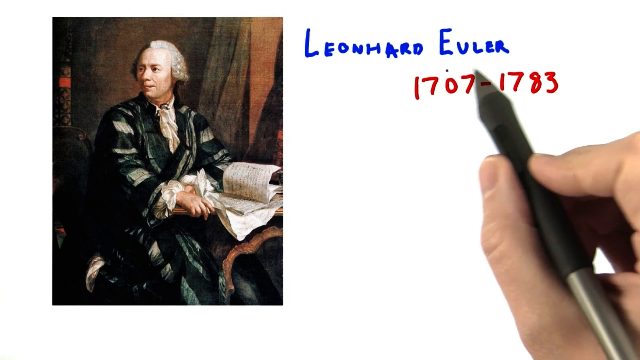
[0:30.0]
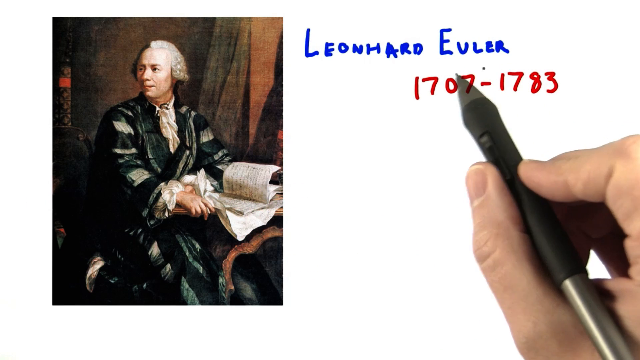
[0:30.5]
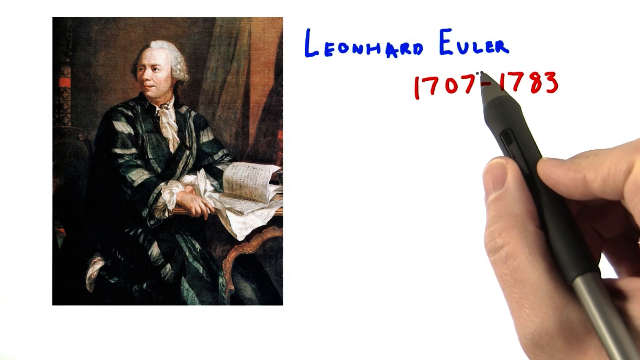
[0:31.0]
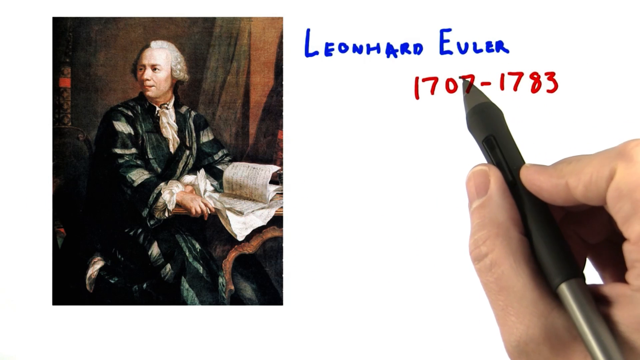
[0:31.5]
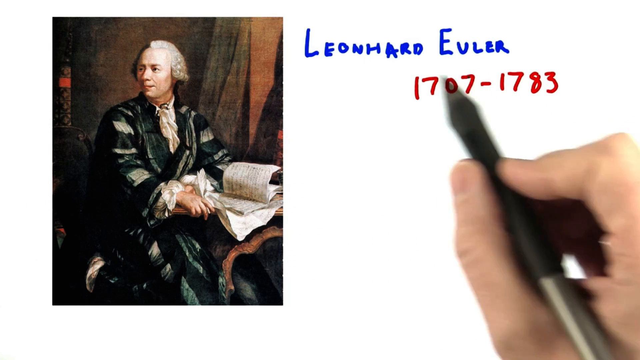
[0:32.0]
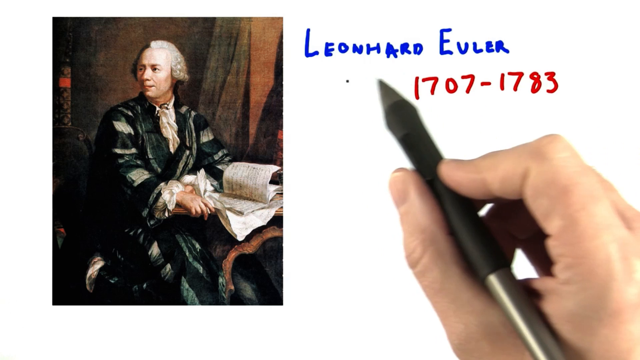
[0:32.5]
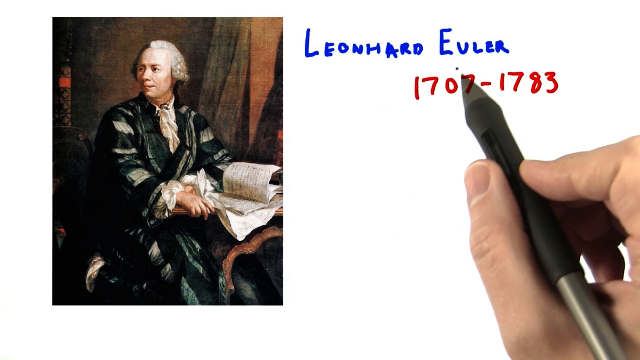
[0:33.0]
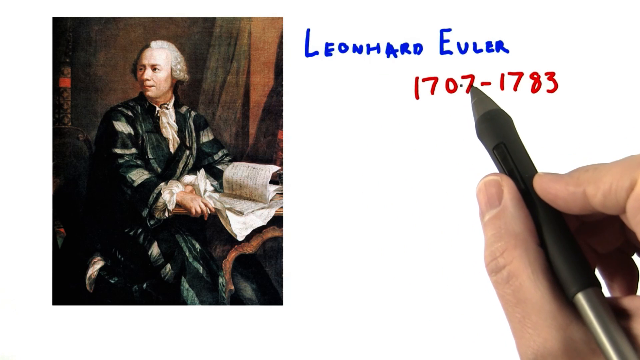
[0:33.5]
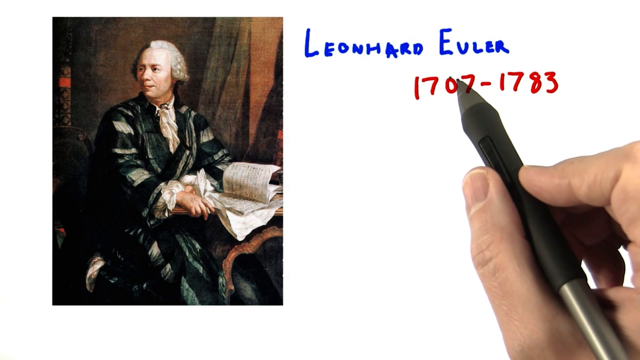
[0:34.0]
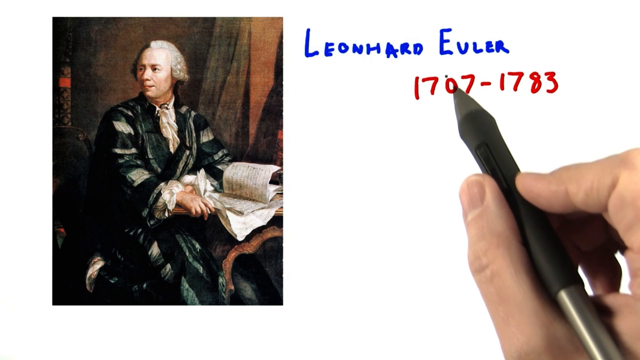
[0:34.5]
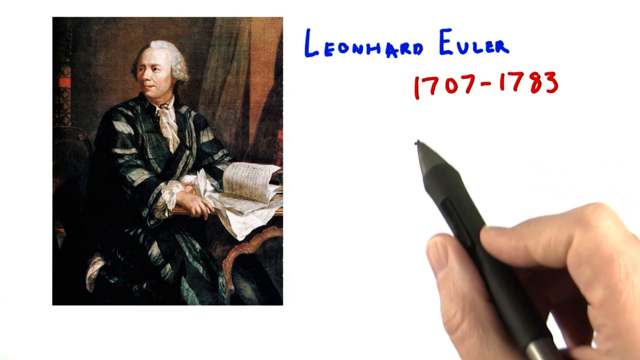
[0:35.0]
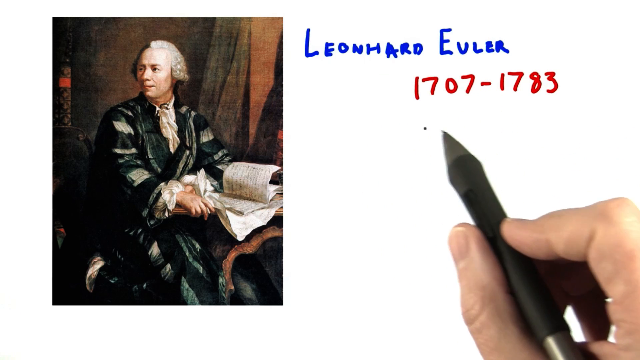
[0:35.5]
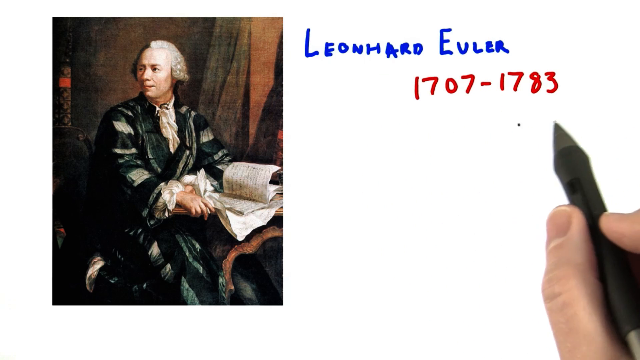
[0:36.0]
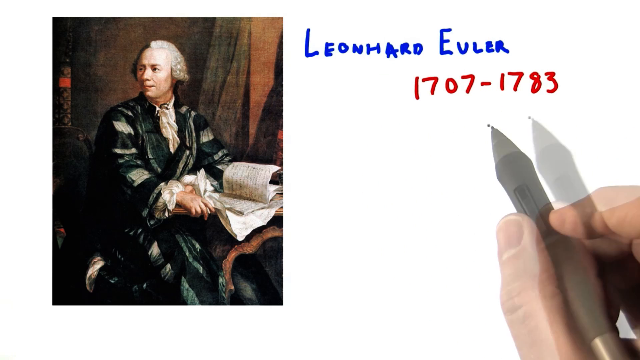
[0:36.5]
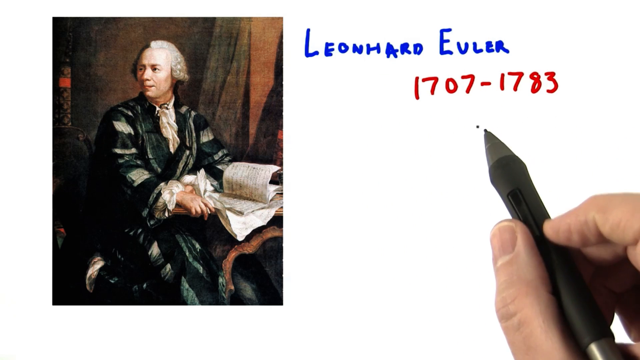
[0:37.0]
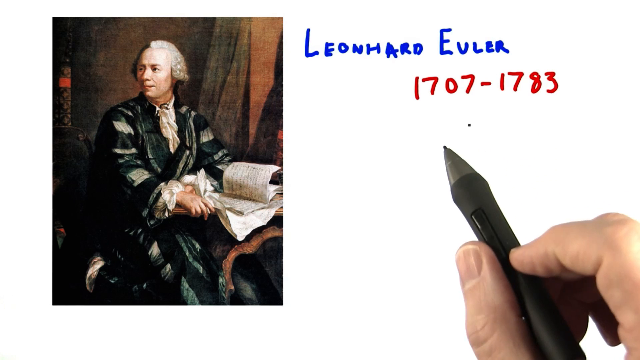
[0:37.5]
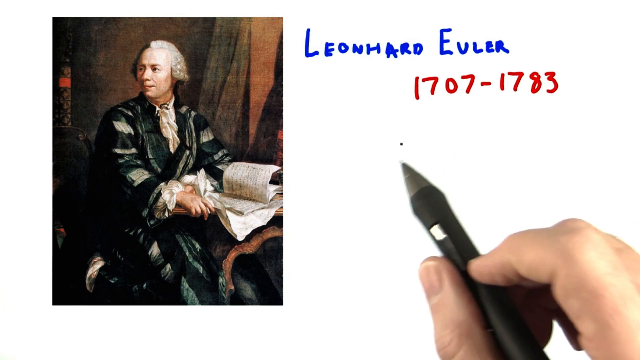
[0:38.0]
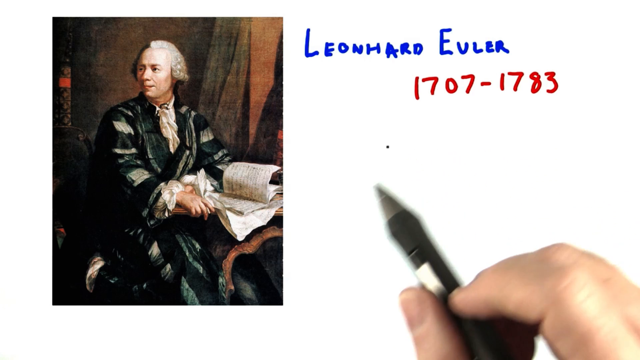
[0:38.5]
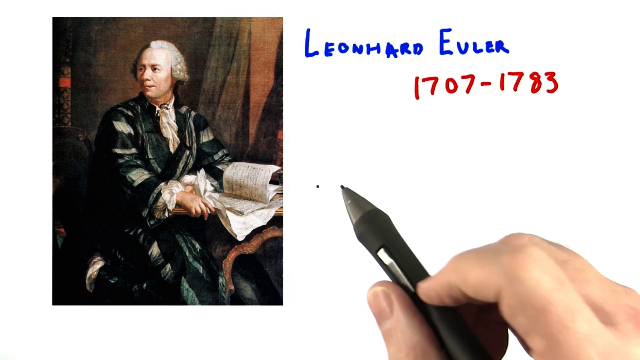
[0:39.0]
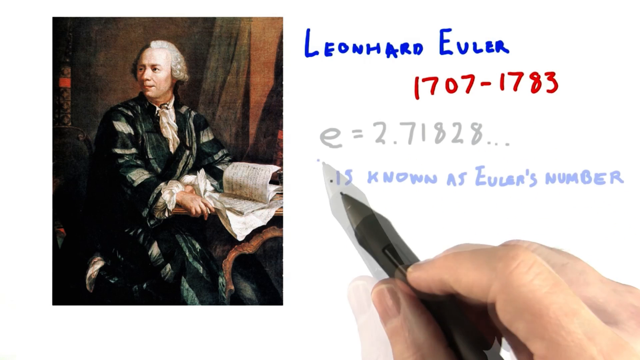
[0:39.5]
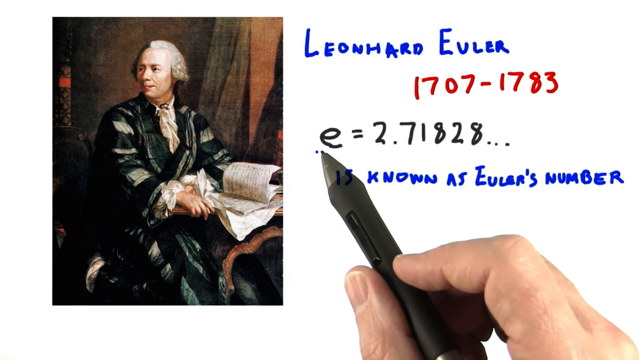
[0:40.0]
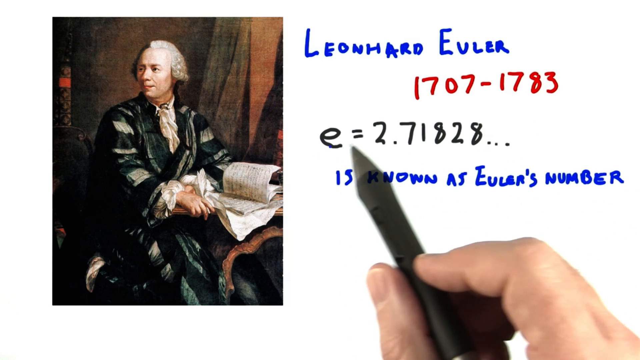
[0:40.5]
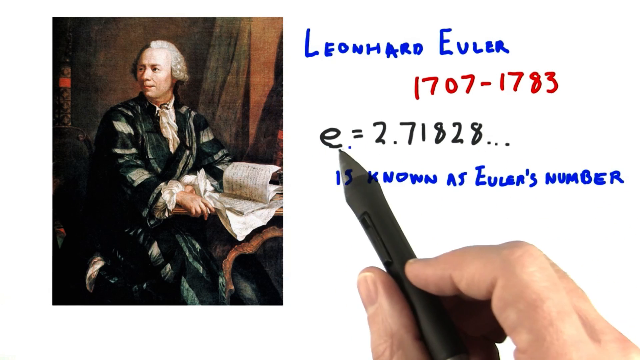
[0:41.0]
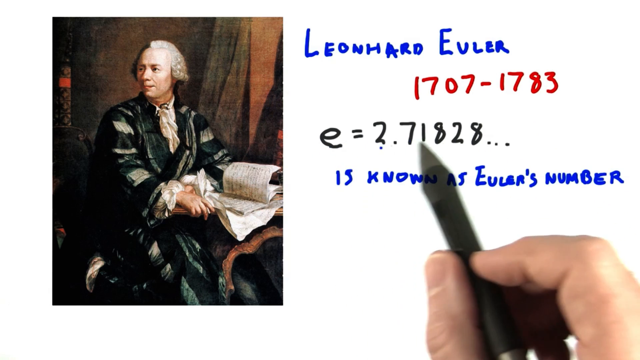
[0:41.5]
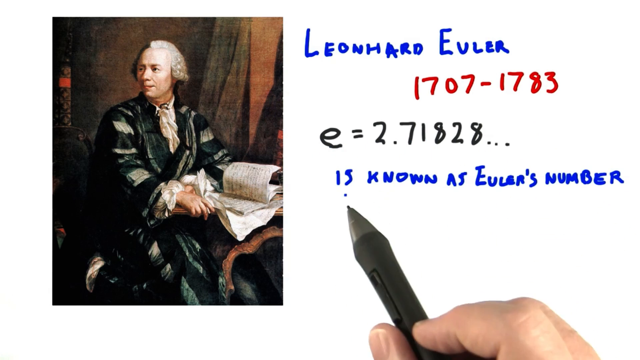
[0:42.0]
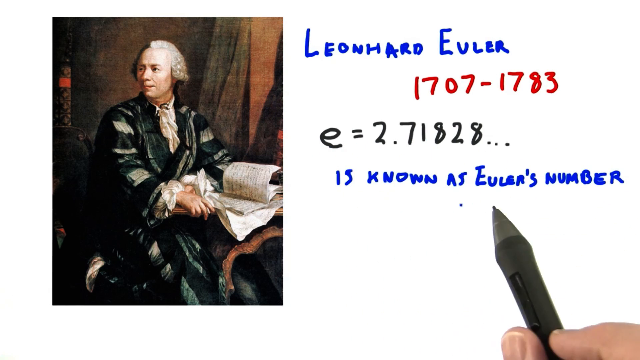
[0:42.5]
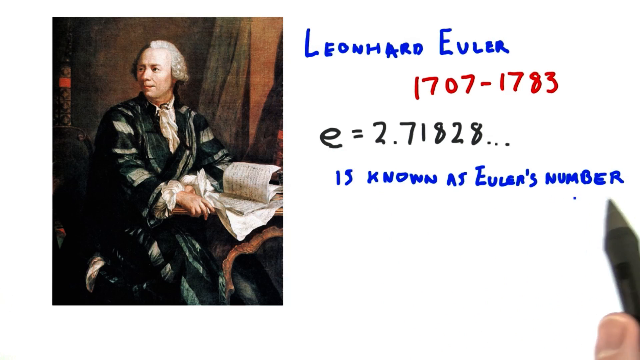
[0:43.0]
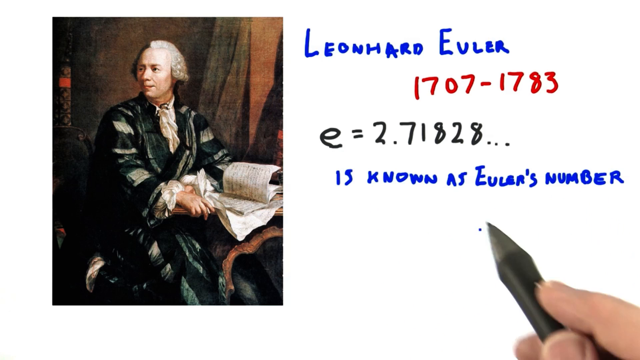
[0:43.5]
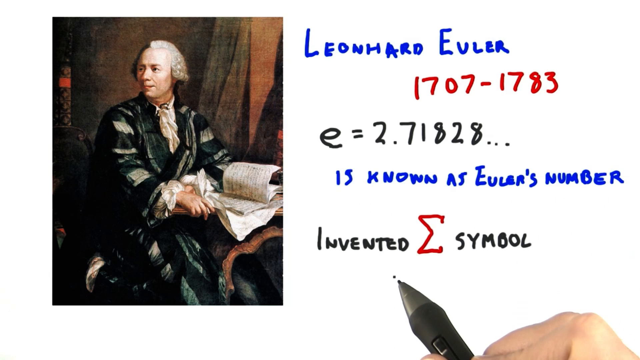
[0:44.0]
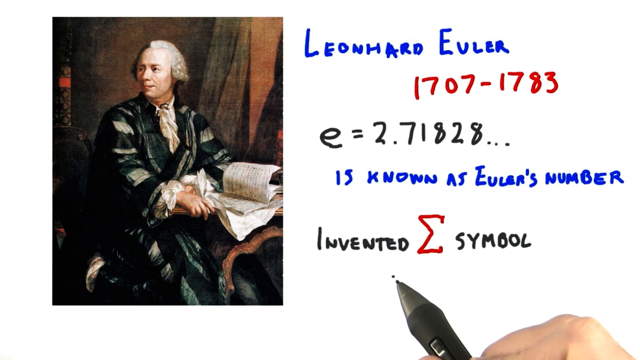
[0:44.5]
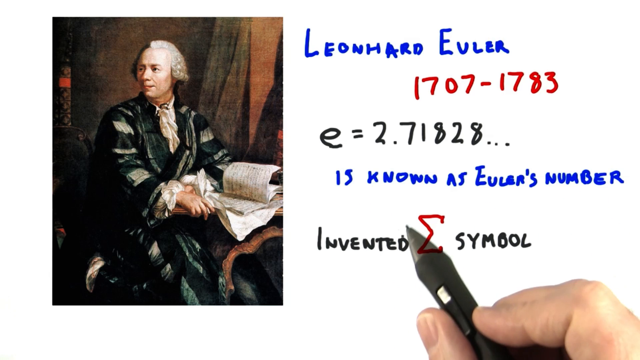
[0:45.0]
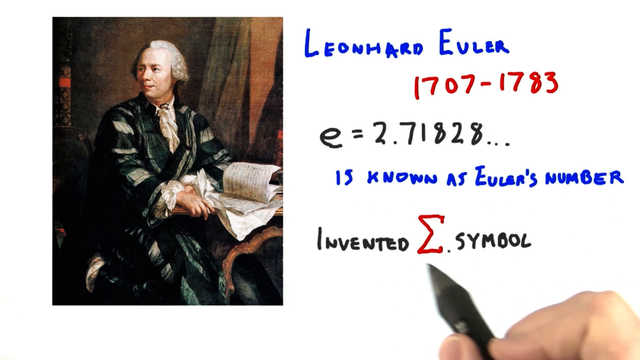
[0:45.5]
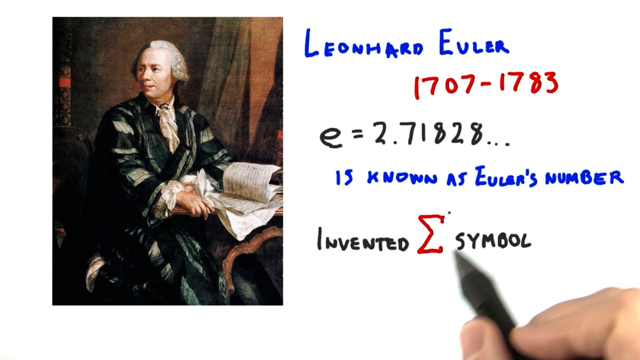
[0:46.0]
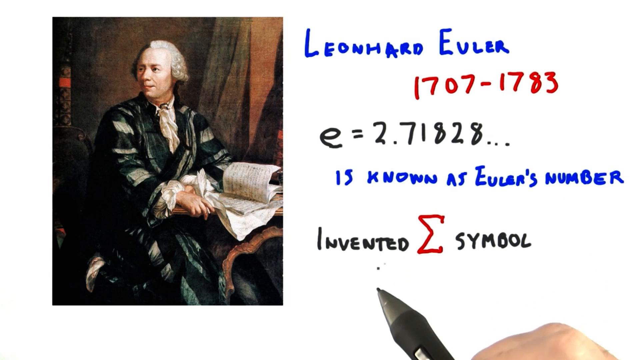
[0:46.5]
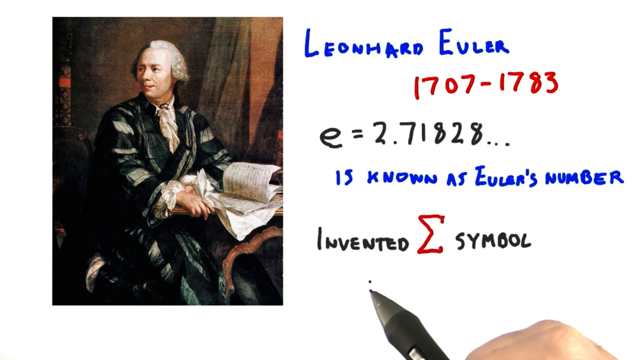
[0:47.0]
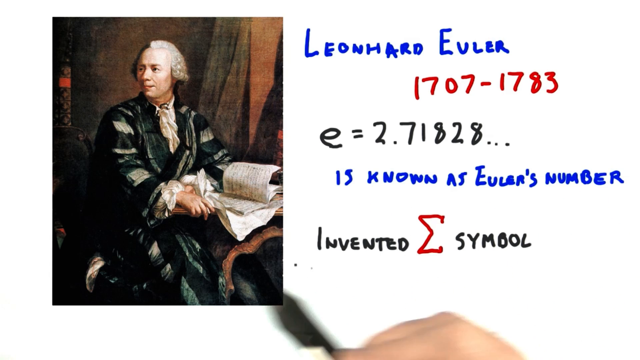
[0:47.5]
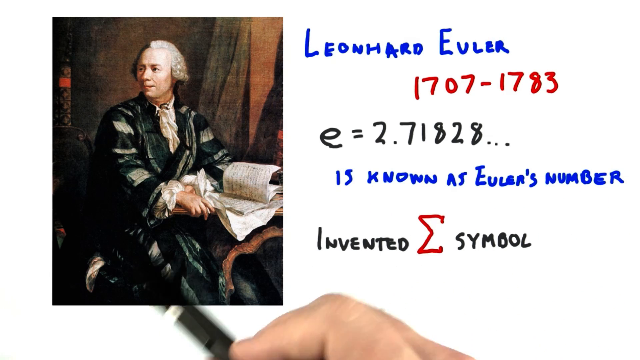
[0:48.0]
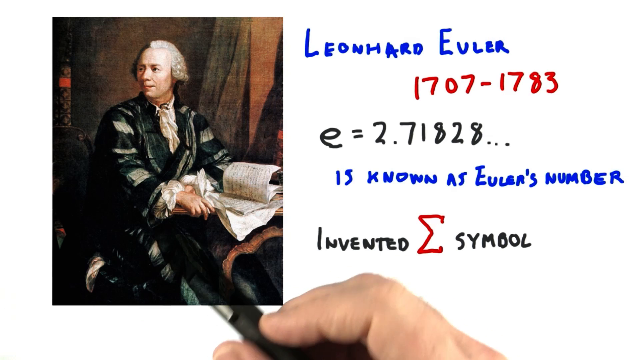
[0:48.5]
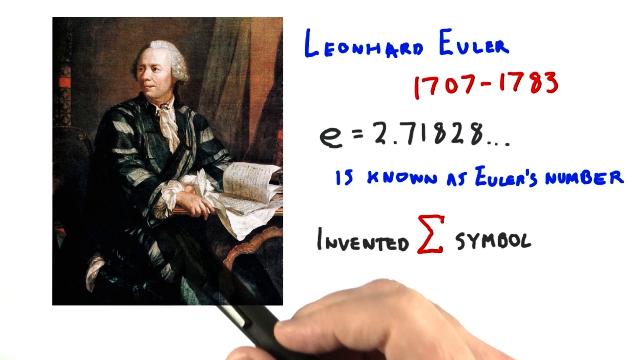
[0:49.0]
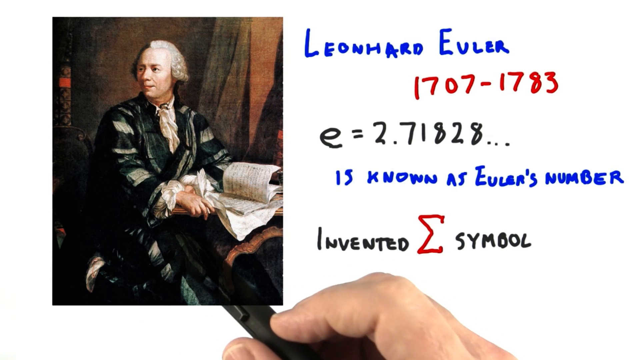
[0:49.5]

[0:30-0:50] The screen is white. On the left side is a picture of a painting of an old man sitting at a brown desk with a book on it. He wears a white powdered wig, a white scarf and a gray and black striped robe. The right side of the screen is white, and a person's hand holding a black pen is visible. At the top of that part of the screen, in blue, is "Leonard Euler", and under it in red is "1707 1783". The hand with the black pen points to different areas of the screen. Then an equation pops up reading "e = 2.71828", and underneath it in black is "known as Euler's number". Below that appears the word "invented" in black, followed by a large letter E symbol and then the word "symbol".